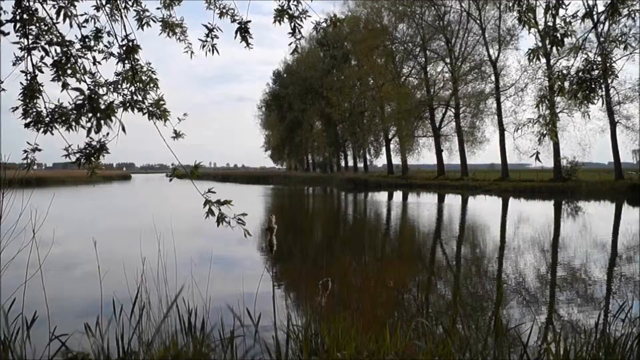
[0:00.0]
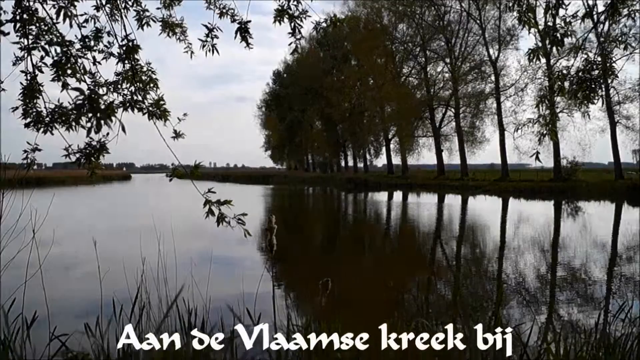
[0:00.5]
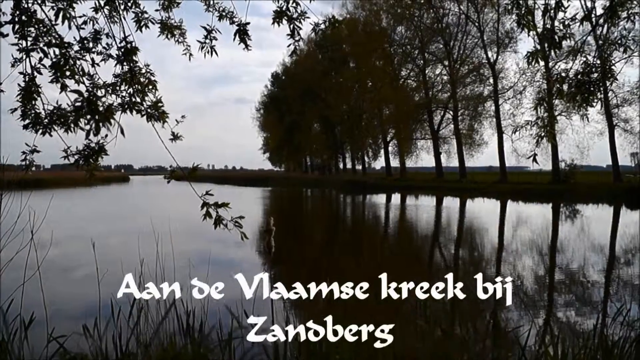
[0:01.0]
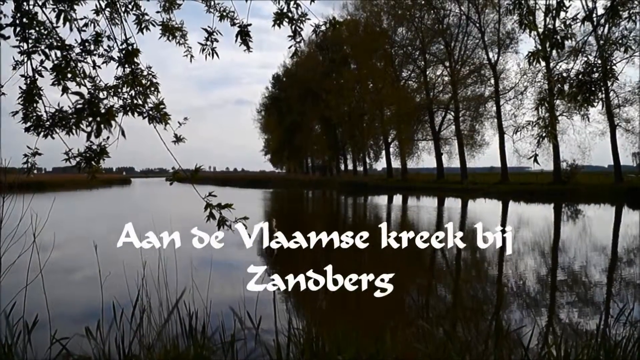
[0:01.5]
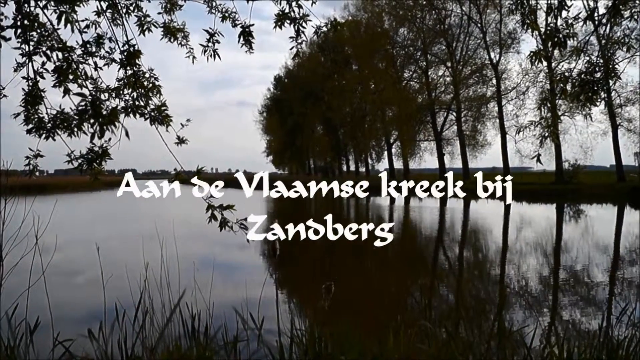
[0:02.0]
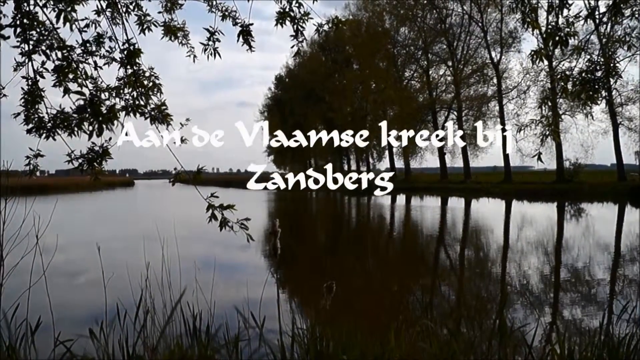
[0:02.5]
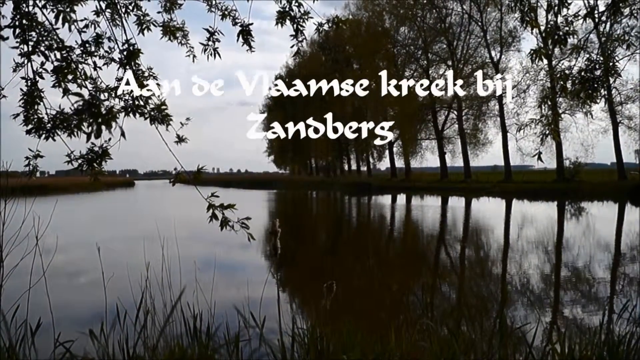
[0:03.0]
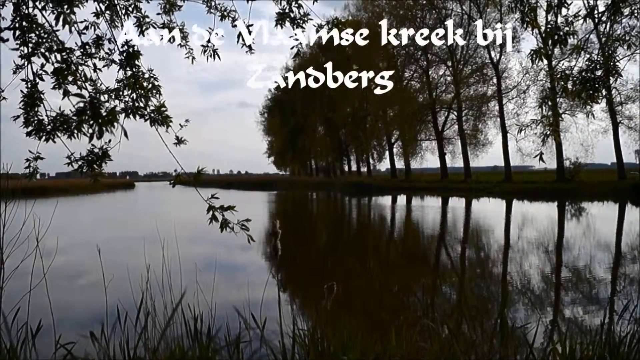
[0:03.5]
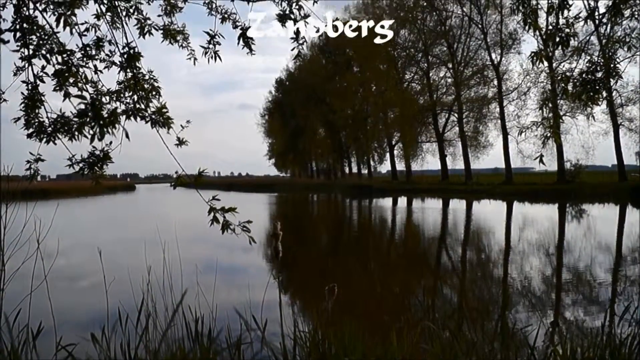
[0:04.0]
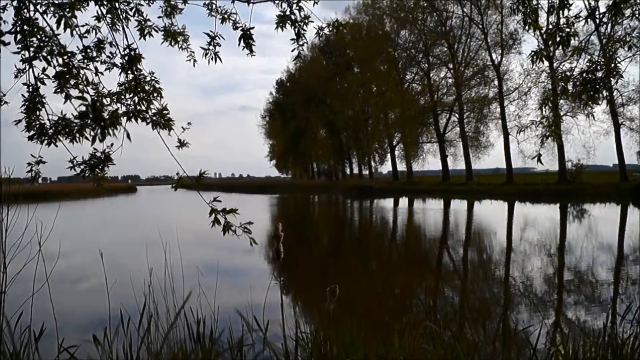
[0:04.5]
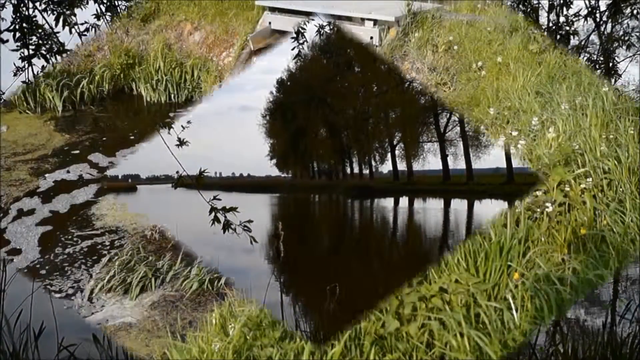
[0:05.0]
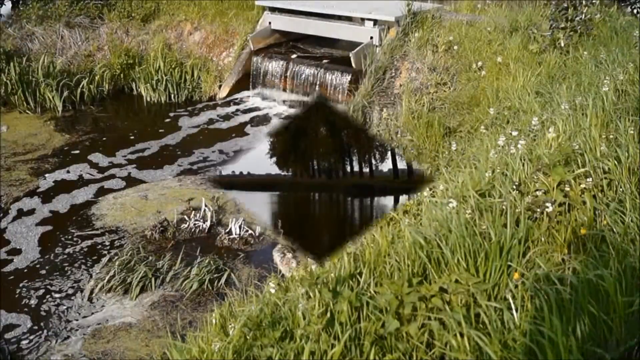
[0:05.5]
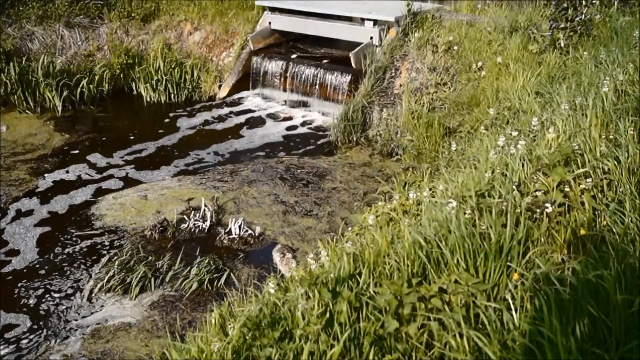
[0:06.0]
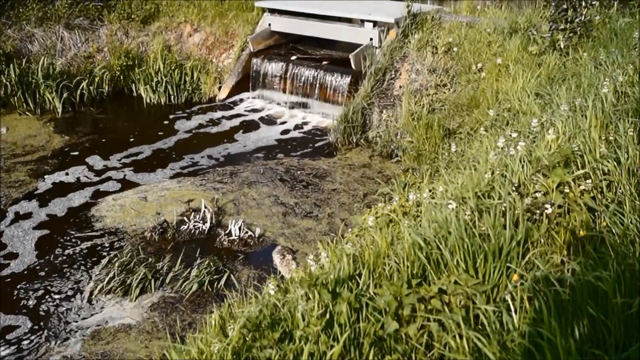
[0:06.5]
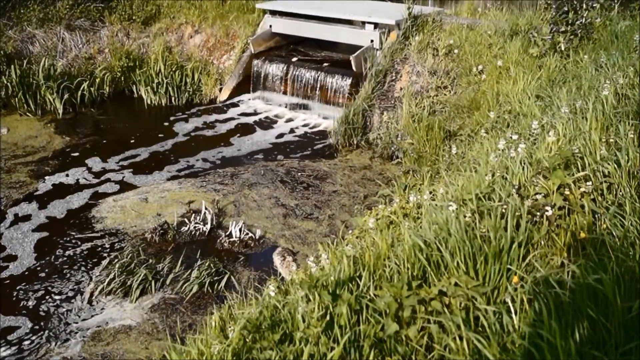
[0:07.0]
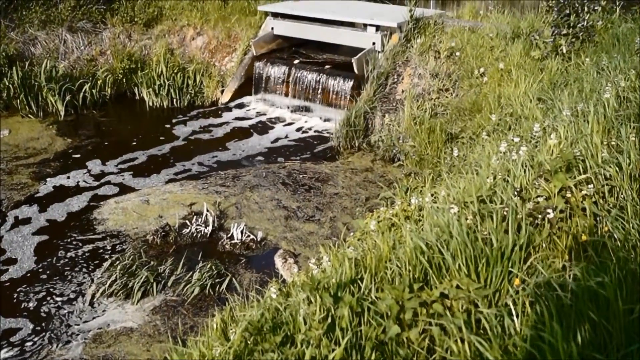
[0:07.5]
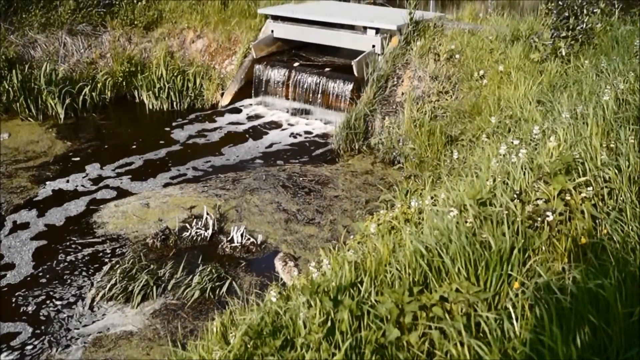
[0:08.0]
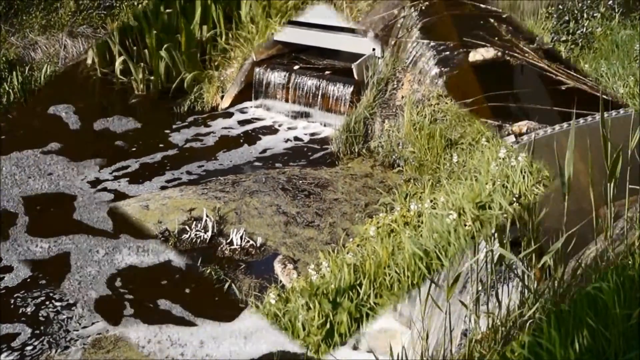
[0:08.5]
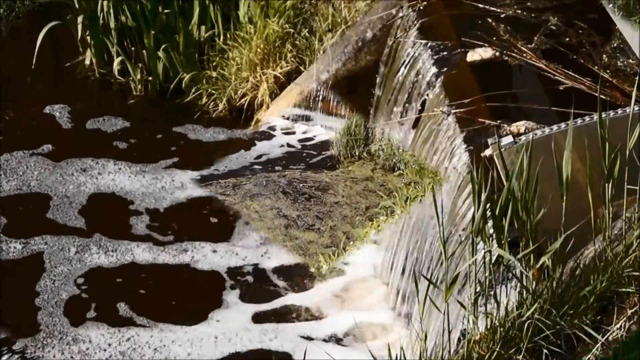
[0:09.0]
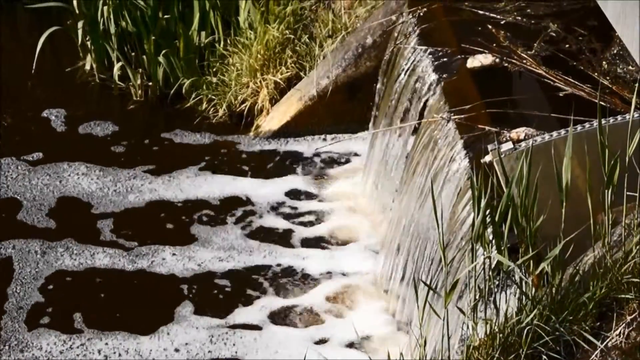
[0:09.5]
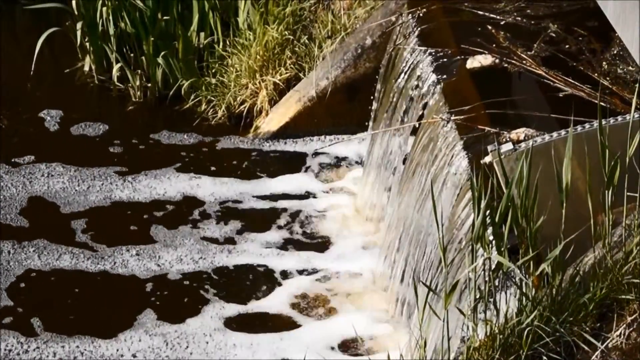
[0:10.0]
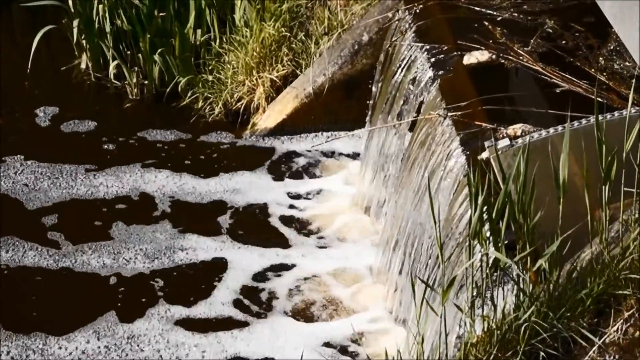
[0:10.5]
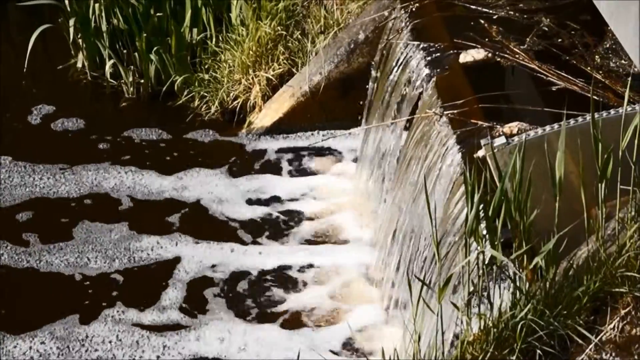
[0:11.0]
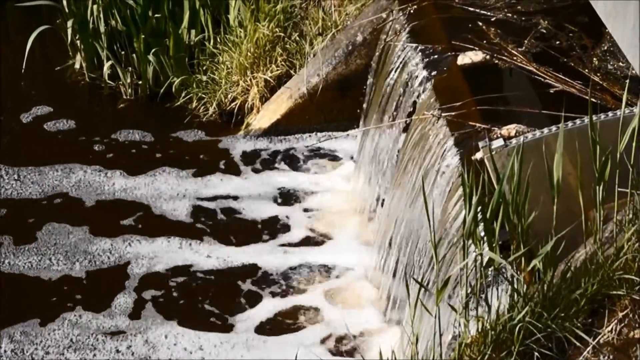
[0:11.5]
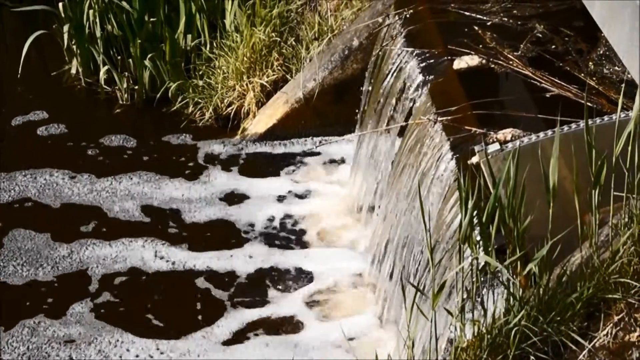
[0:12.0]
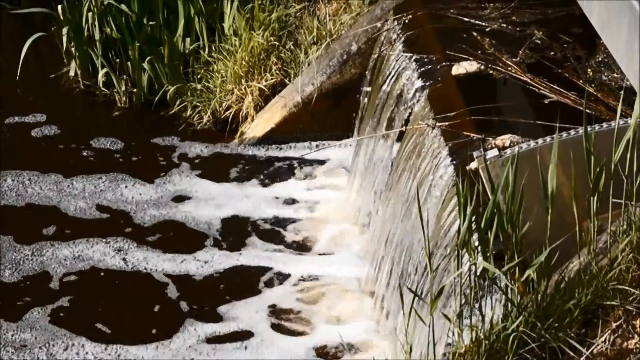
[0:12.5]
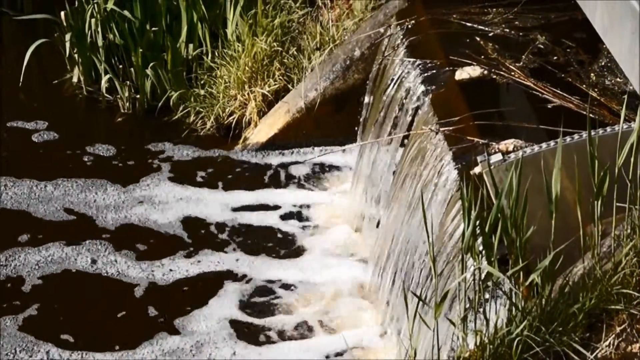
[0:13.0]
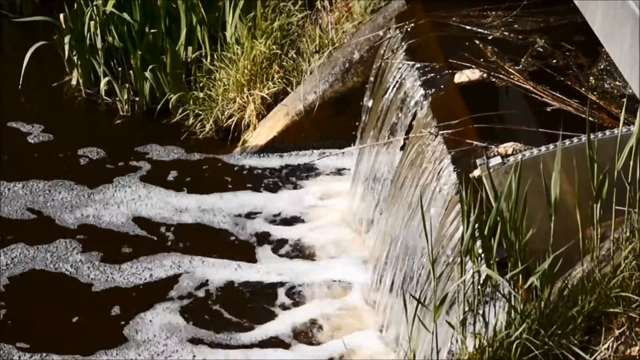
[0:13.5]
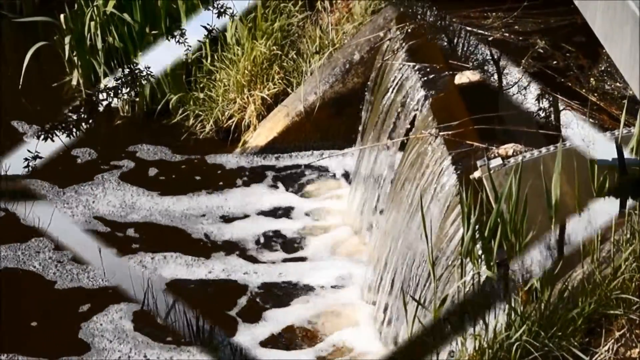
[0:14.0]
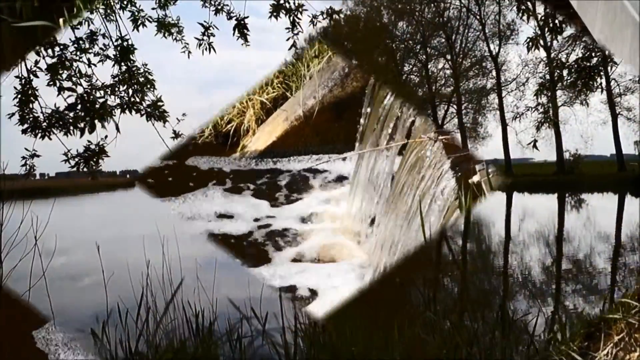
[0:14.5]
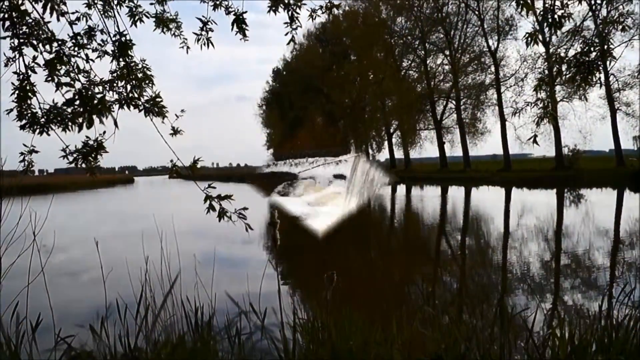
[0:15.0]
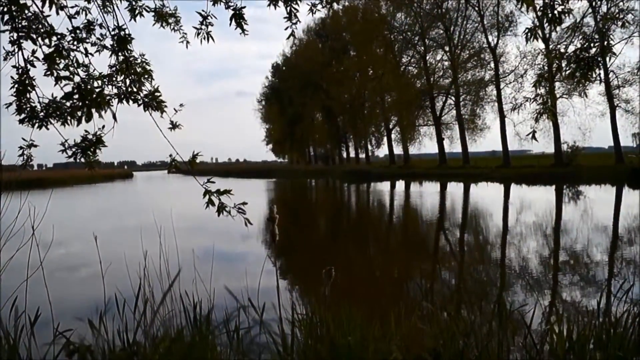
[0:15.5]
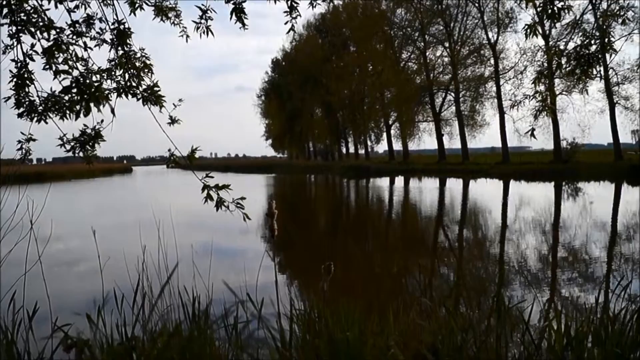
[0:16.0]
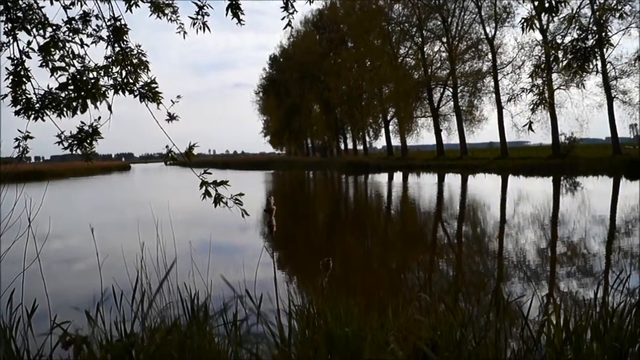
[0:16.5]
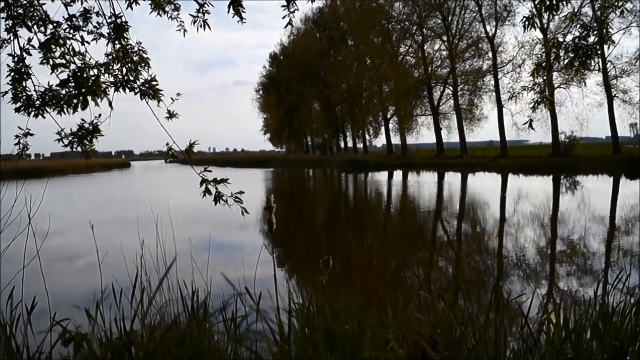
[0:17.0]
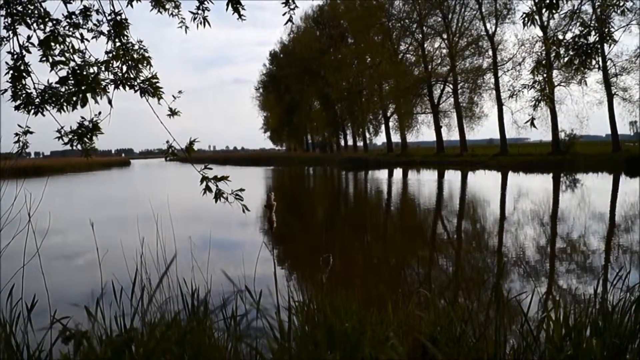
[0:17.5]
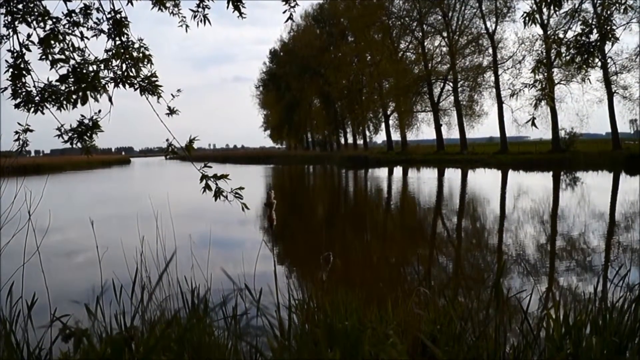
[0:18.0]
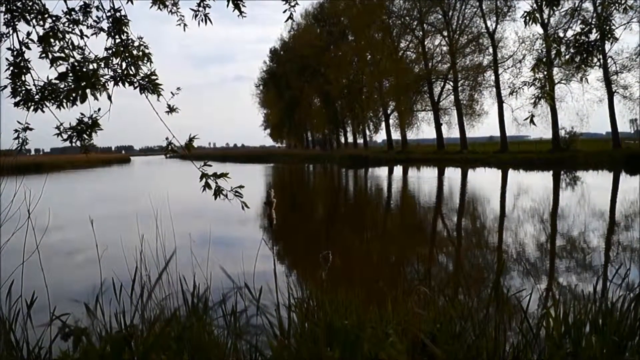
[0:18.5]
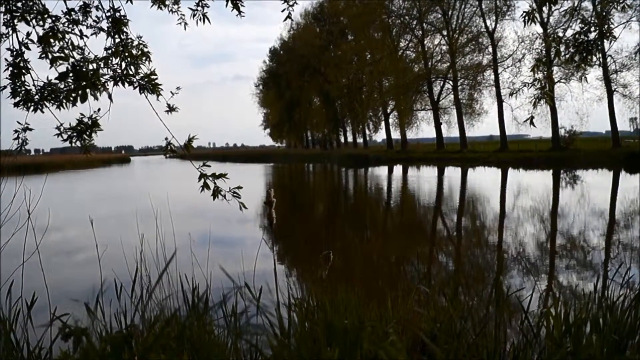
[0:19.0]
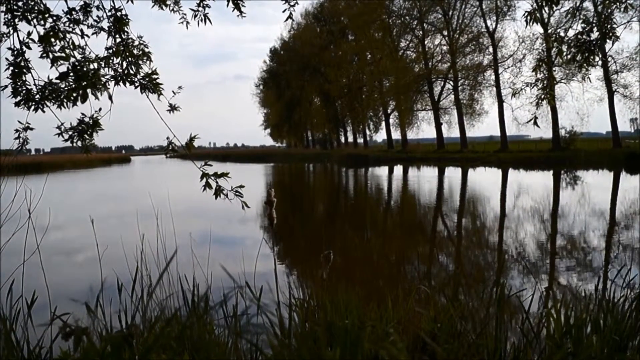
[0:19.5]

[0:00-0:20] A river appears under a blue sky, and it looks like the viewpoint is underneath a tree, since some leaves come down from the top of the frame. On the other bank of the river are around 10 trees standing up tall with sparsely scattered leaves; the sky is visible behind the trees, and the trees are reflected in the river. White text that is not in English scrolls up from the bottom middle of the screen to the top, reading "On de Vlaams Kriek Bij Zanderberg". The video then uses diamond-shaped transitions: diamonds form and give way to the next scene. This scene shows a little stream with what seems to be a small man-made waterfall going down into it. Above the waterfall are some metallic white objects that seem to guide the water, and there is a lot of green grass on both sides of the stream. After another diamond transition, the view zooms up on the little waterfall, which is probably only about one meter high, like a faucet pouring water into the stream. There is a little white foam where the water lands, a bit of concrete at a diagonal angle on both sides leading up to the waterfall, and green grass beside the concrete. A diamond transition leads back to the original river scene, with the river, the trees on the other bank, the sky and a bit of the leaves falling above.